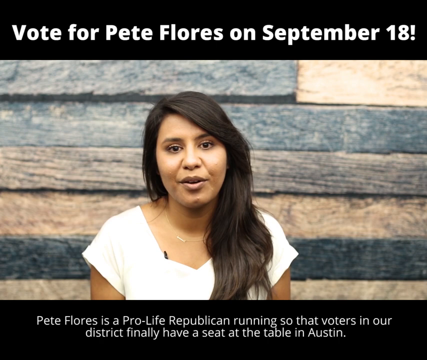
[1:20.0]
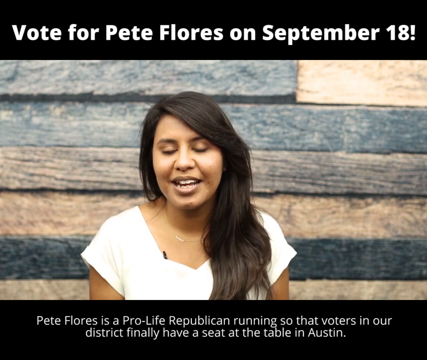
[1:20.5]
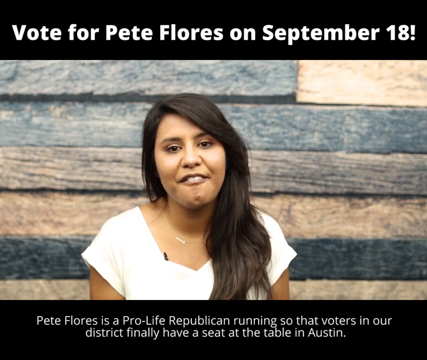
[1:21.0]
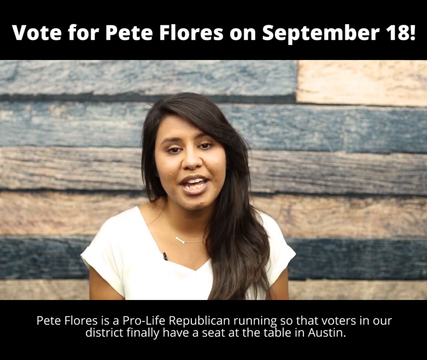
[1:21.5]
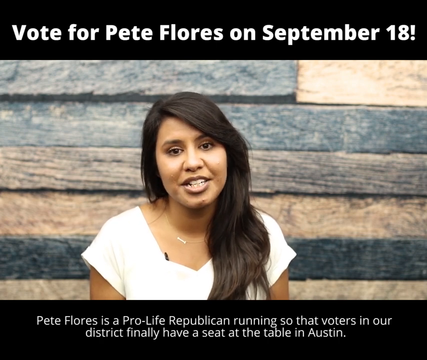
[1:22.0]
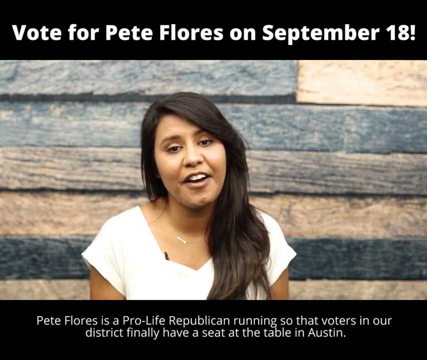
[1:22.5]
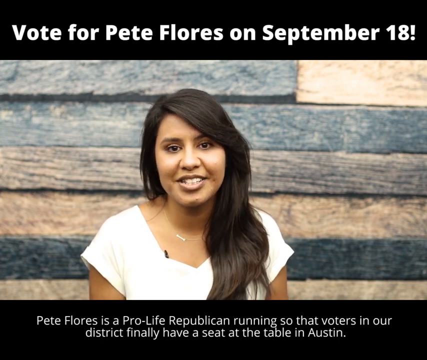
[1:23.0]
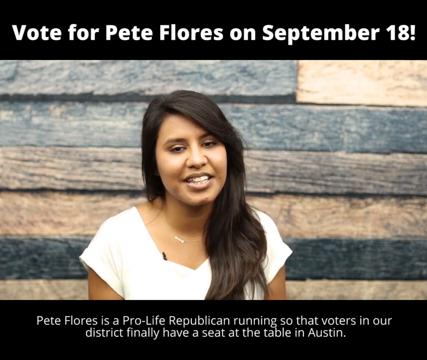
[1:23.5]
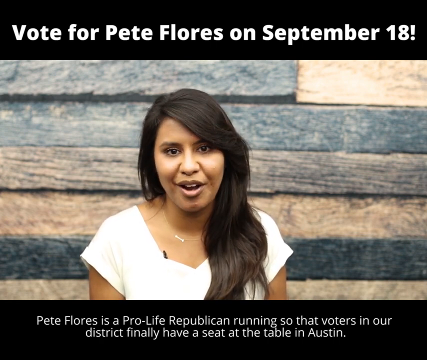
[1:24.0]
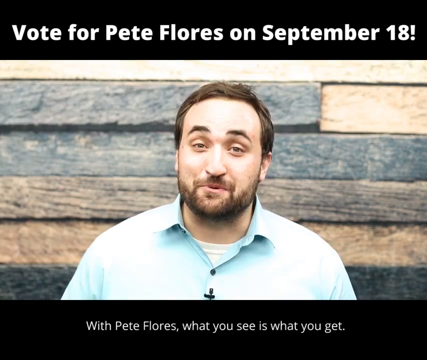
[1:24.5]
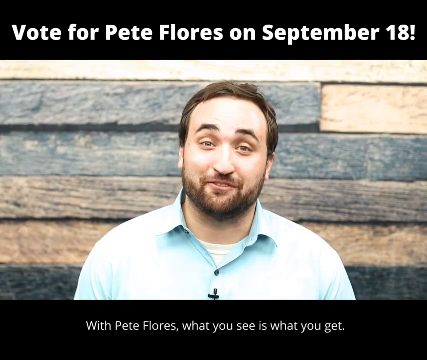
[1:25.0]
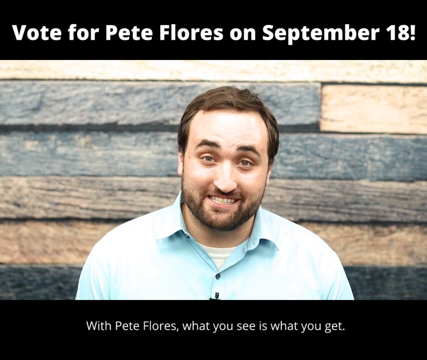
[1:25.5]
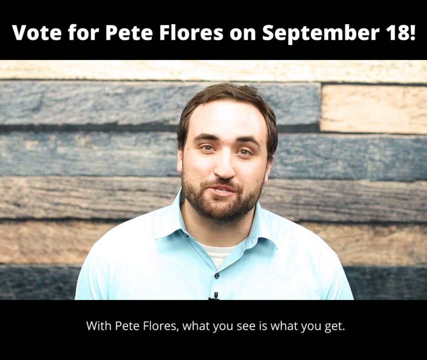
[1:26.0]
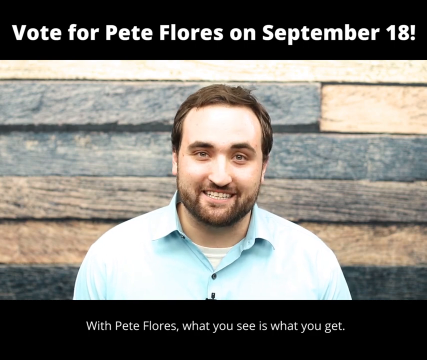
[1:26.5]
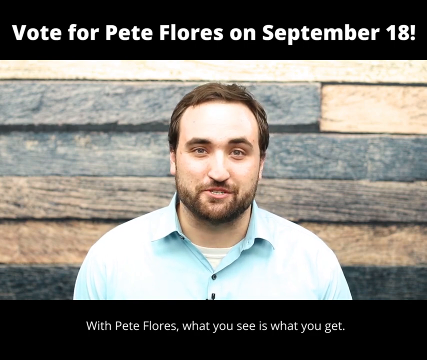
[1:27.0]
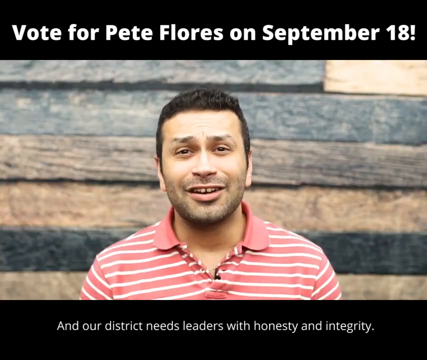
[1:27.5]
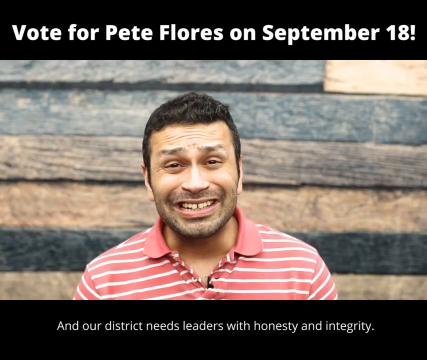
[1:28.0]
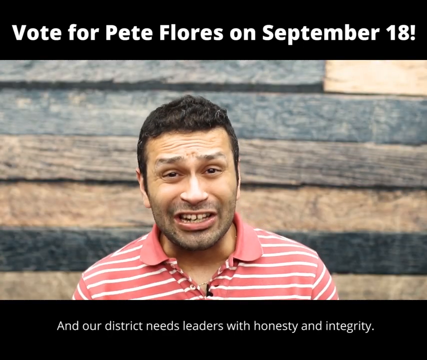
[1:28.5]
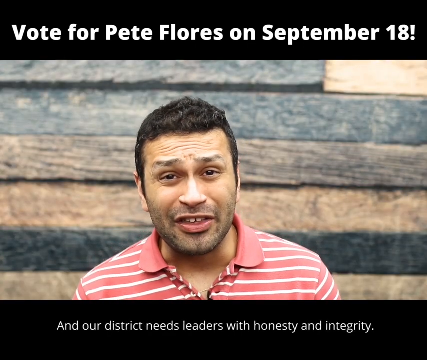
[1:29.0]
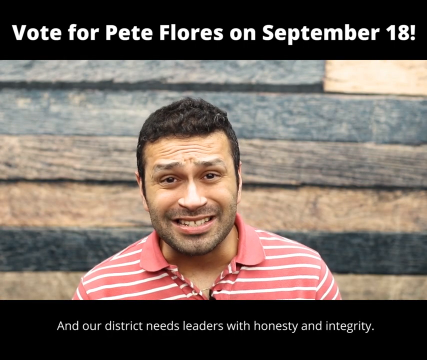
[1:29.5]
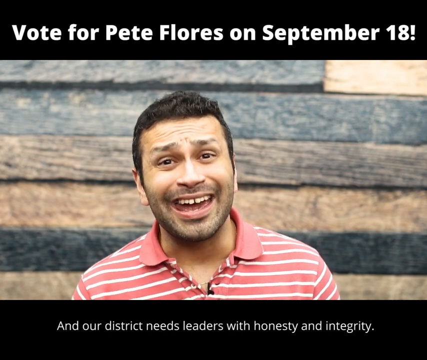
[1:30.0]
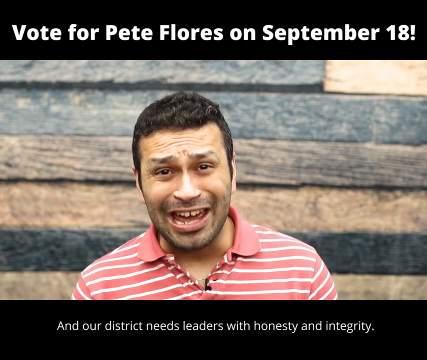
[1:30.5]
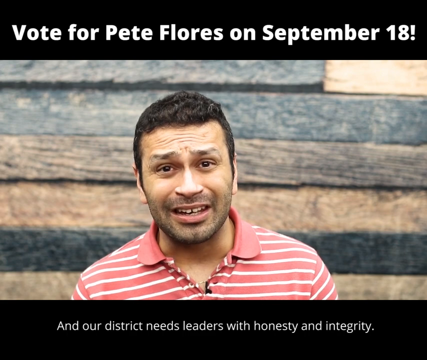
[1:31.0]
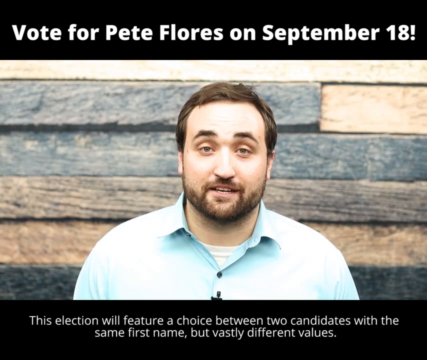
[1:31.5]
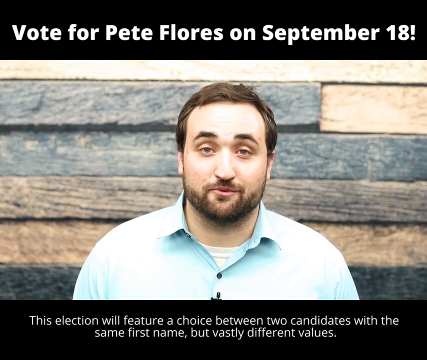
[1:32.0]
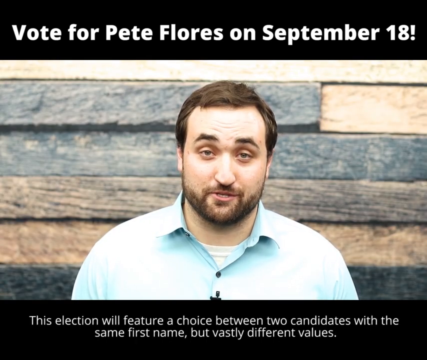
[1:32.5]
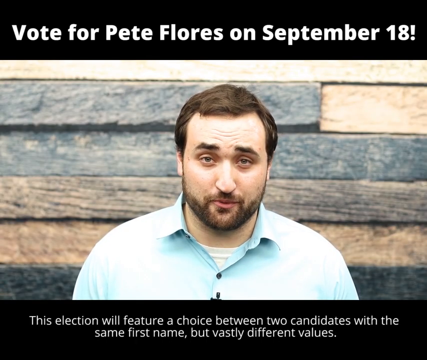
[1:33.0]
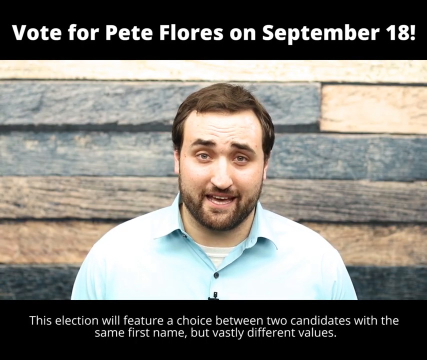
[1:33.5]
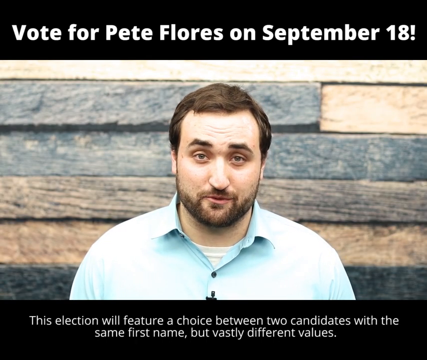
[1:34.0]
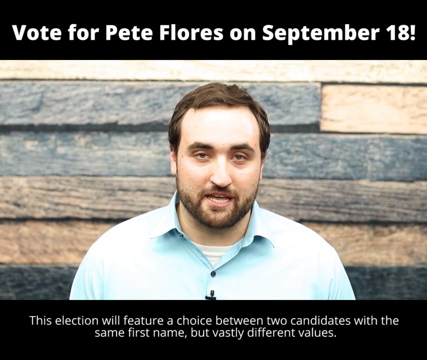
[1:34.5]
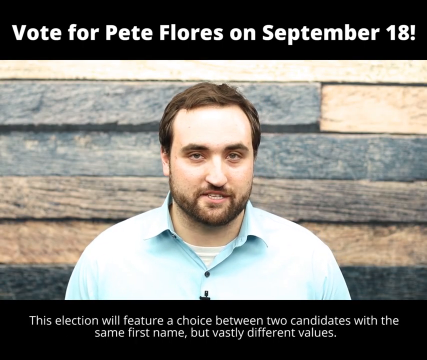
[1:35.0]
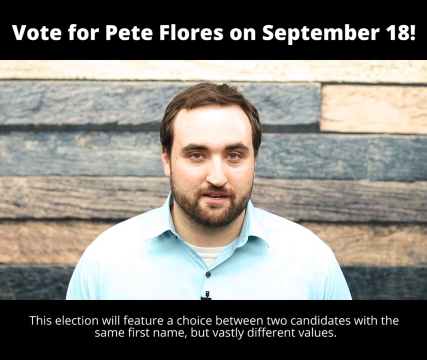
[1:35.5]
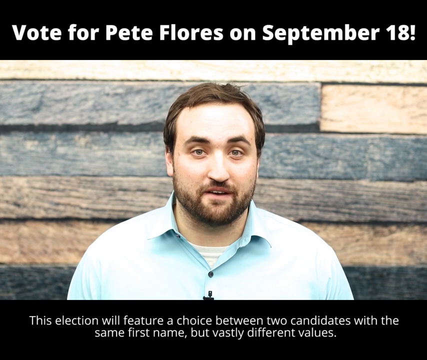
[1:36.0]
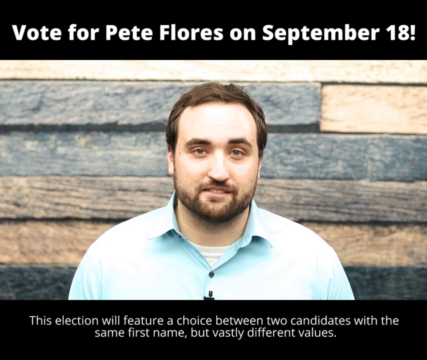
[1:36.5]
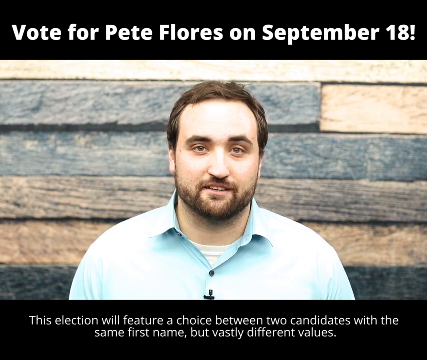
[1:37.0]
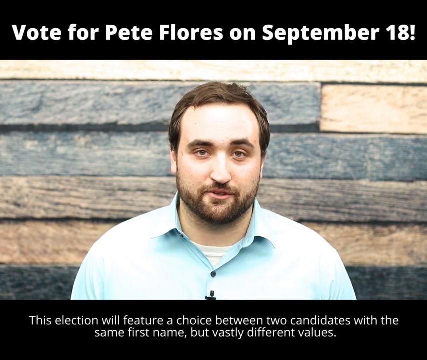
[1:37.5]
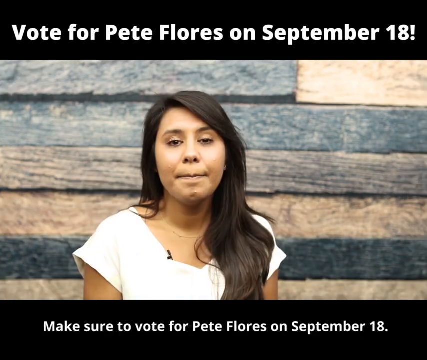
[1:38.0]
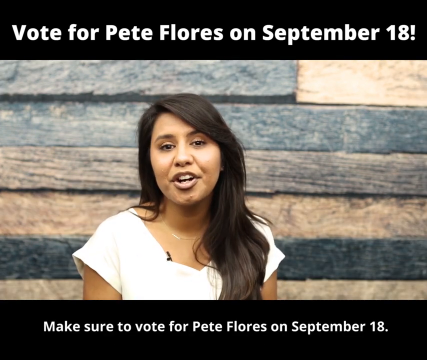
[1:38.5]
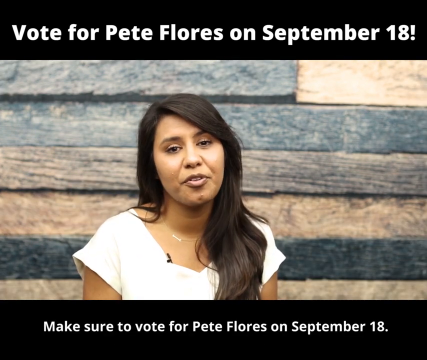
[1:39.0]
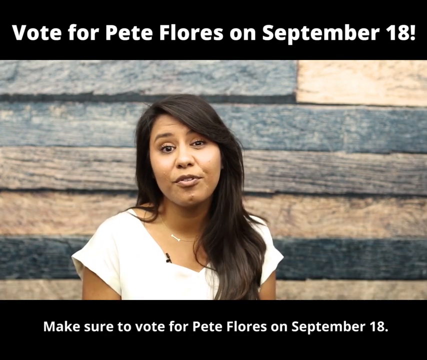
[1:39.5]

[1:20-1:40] A young woman with long black hair talks to the camera in front of a background of wooden boards running horizontally across the wall. Above her are the words "vote for Pete Flores on September the 18th", and below her the words "Pete Flores is a pro-life Republican running so that voters in our district finally have a seat at the table in Austin." The view changes to a young man with short brown hair, a beard and a moustache, wearing a blue top; the words underneath now say "with Pete Flores what you see is what you get." The next person nods slightly as he talks to the camera. The video then returns to the man with short black hair, a beard and a moustache, and the words say "this election will feature a choice between two candidates with the same first name but vastly different values." Everyone talks to the camera and they seem to be talking about an election. The first young woman comes back, and the words say "make sure to vote for Pete Flores on September the 18th."